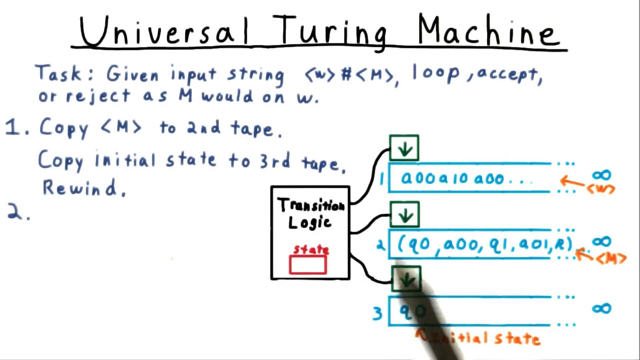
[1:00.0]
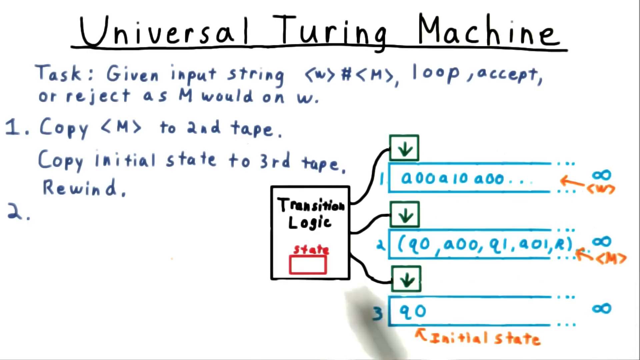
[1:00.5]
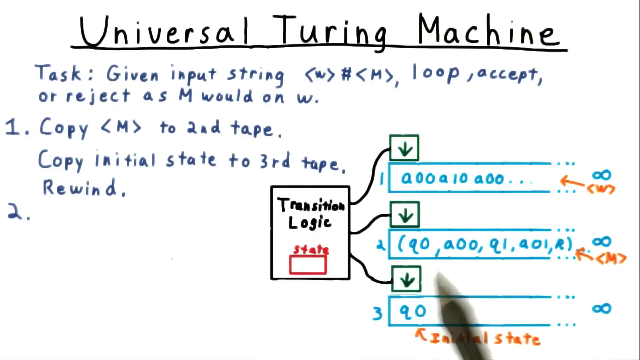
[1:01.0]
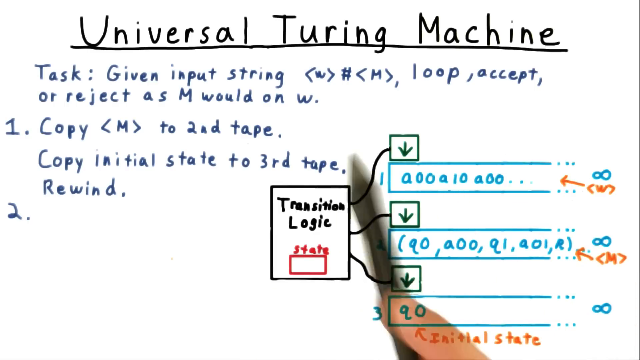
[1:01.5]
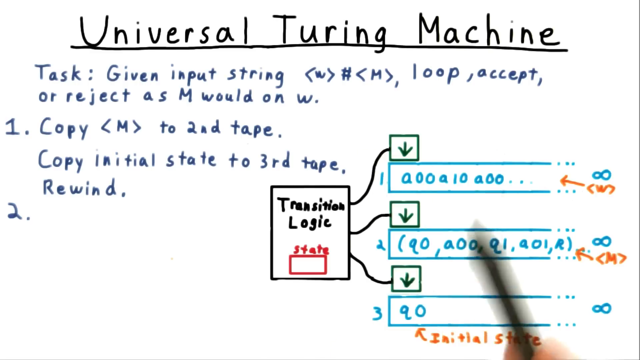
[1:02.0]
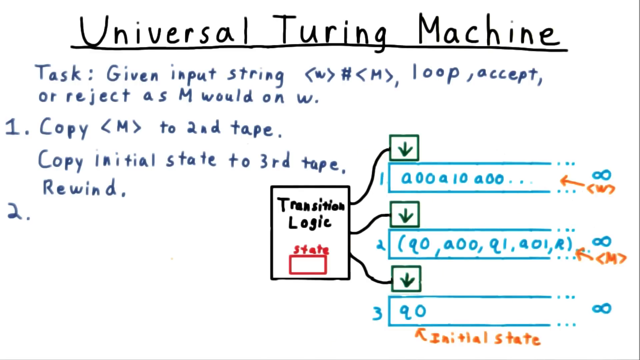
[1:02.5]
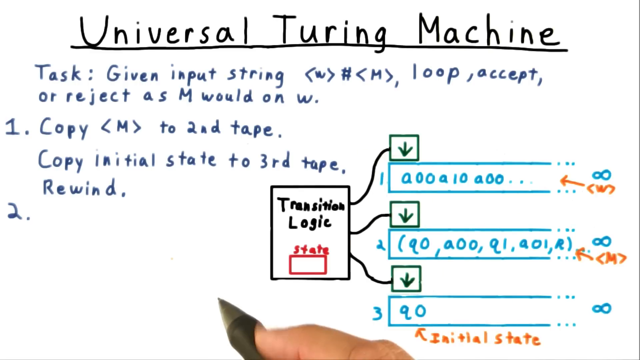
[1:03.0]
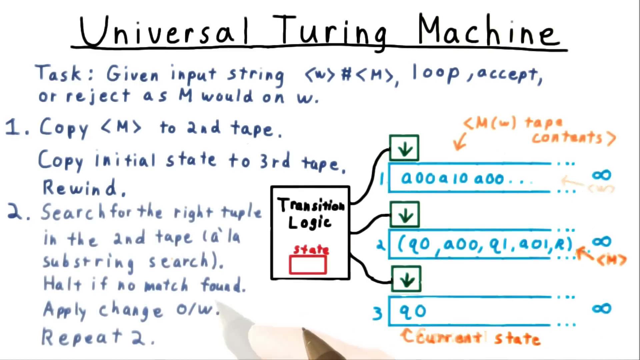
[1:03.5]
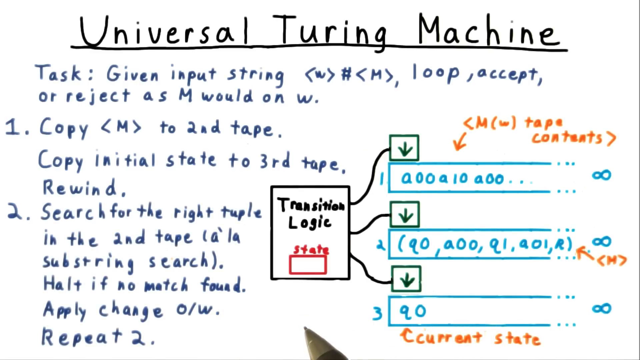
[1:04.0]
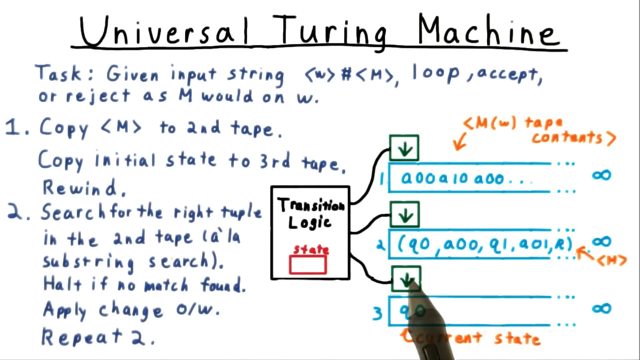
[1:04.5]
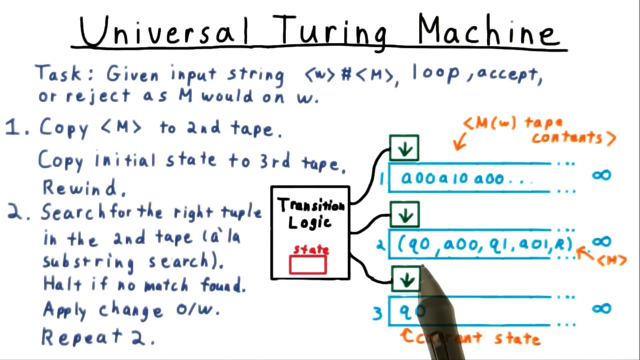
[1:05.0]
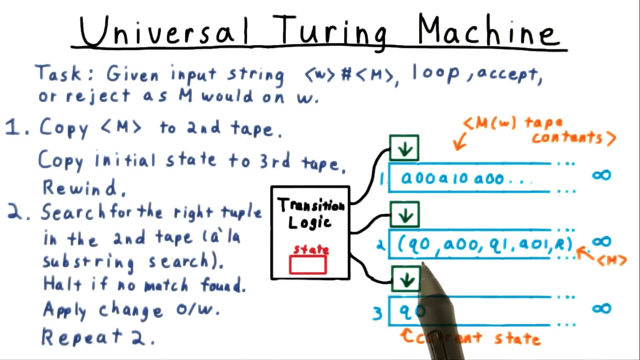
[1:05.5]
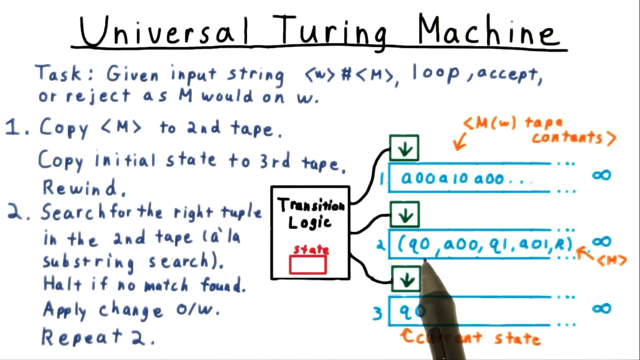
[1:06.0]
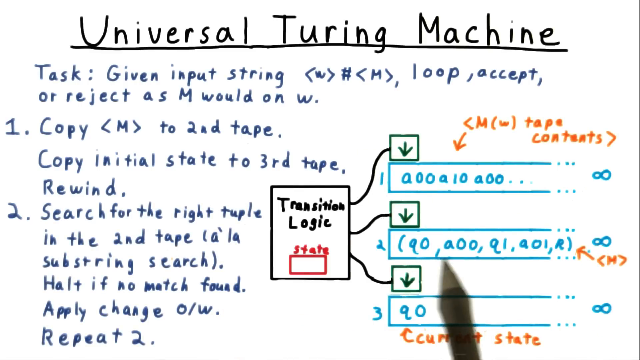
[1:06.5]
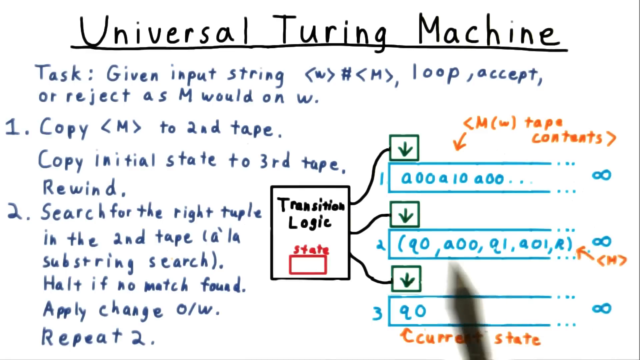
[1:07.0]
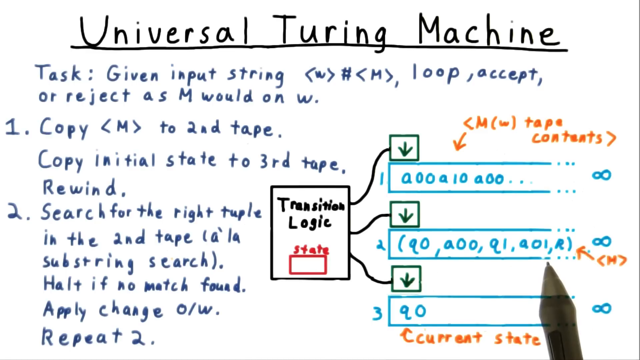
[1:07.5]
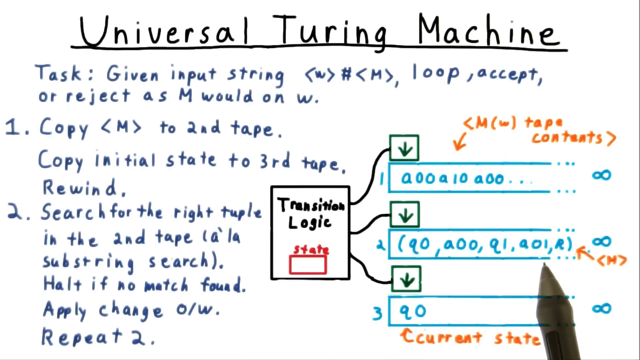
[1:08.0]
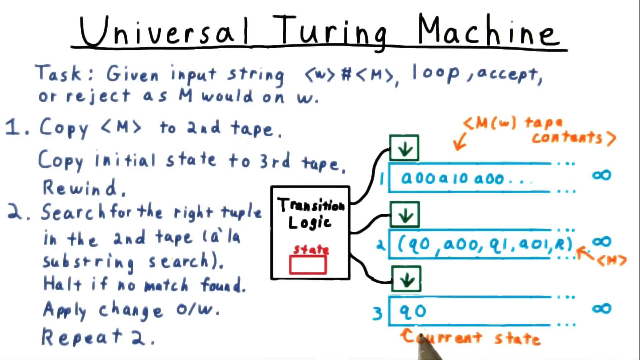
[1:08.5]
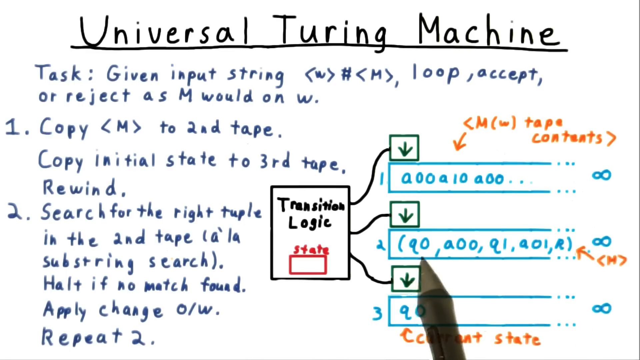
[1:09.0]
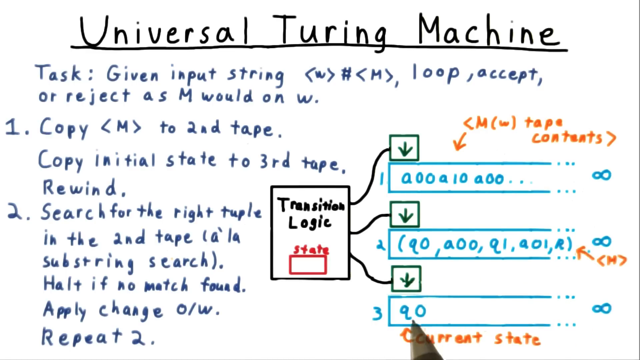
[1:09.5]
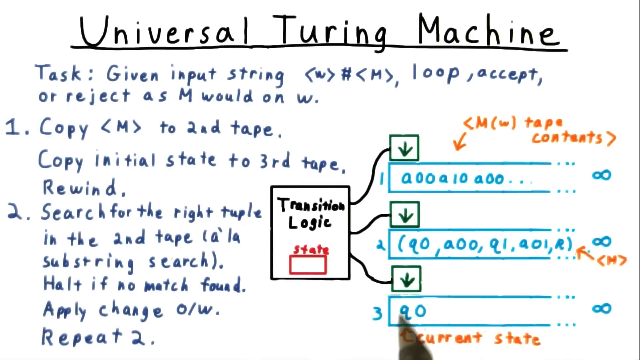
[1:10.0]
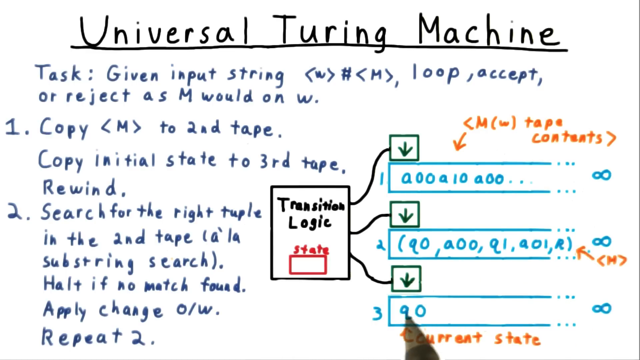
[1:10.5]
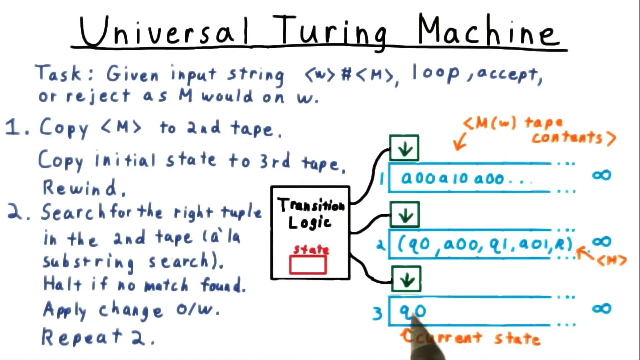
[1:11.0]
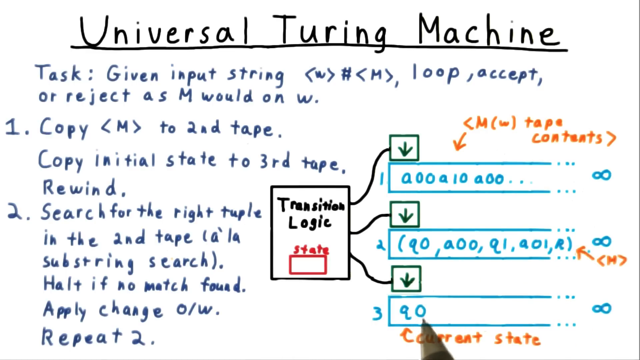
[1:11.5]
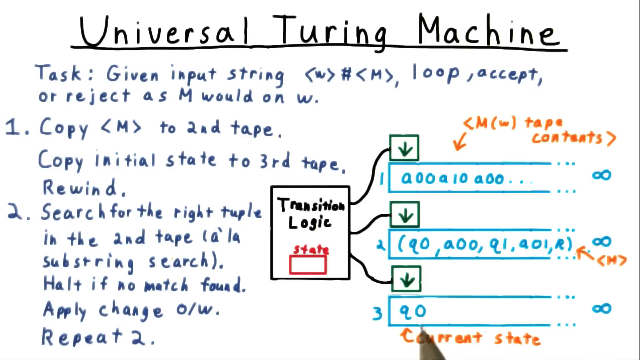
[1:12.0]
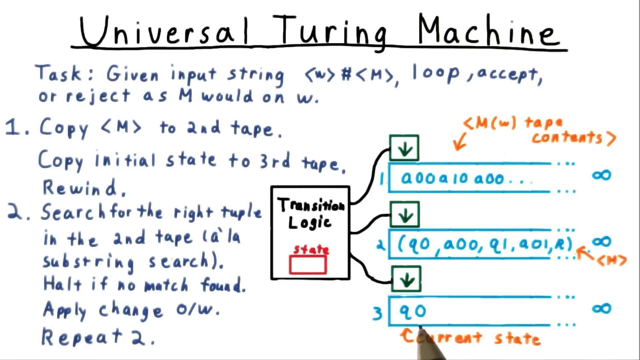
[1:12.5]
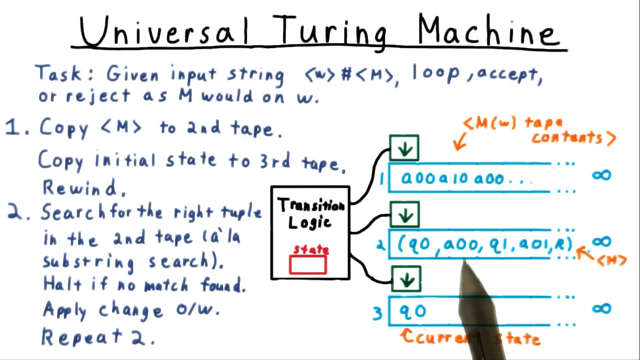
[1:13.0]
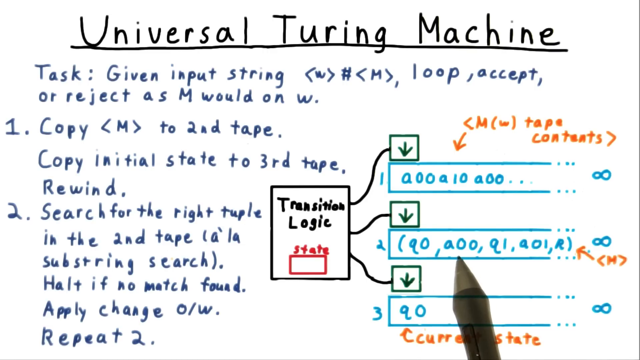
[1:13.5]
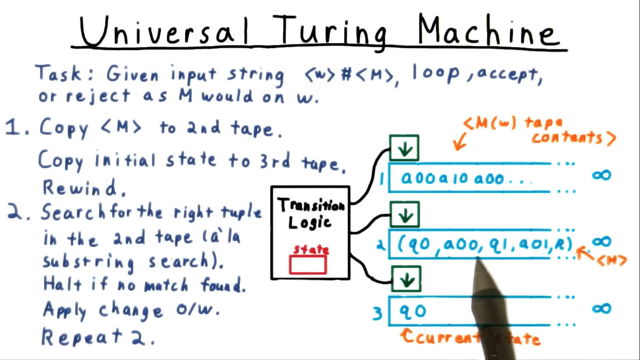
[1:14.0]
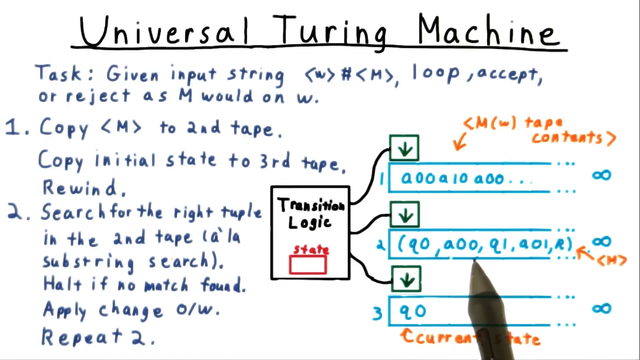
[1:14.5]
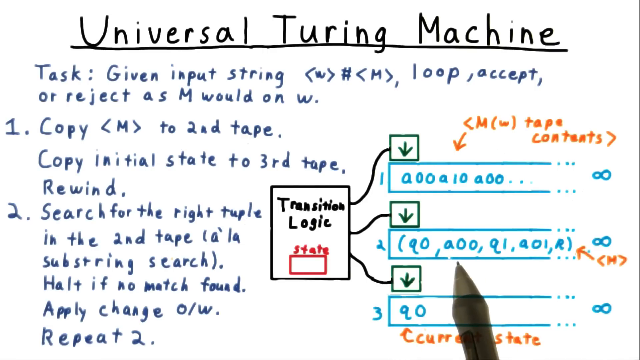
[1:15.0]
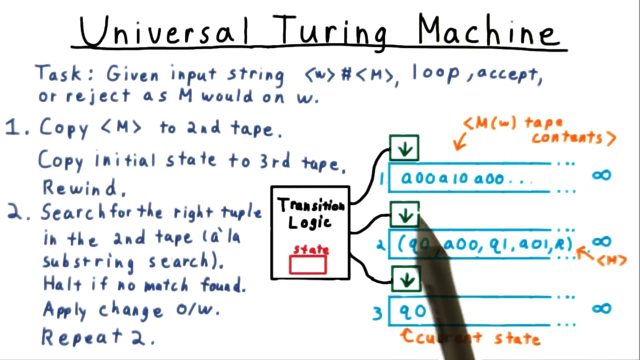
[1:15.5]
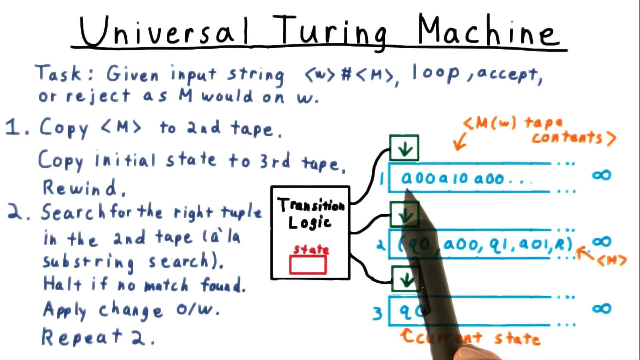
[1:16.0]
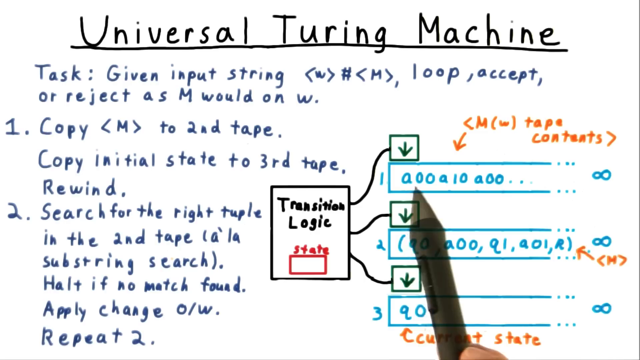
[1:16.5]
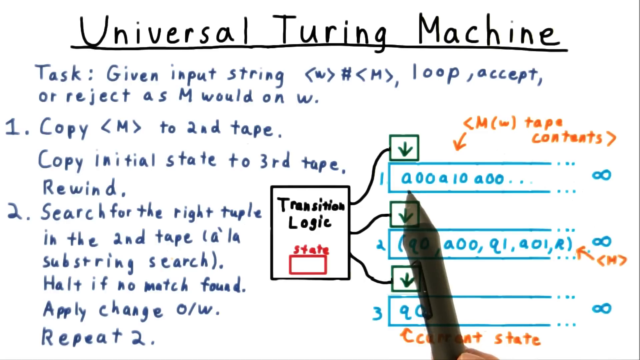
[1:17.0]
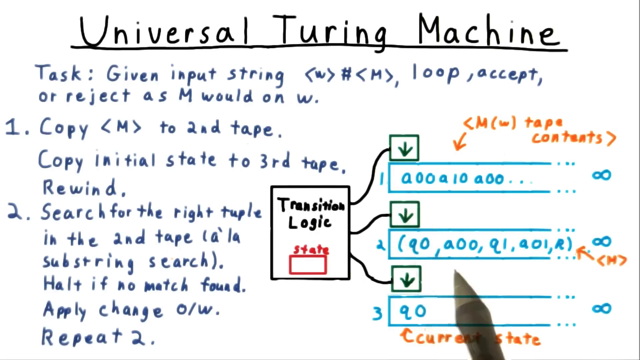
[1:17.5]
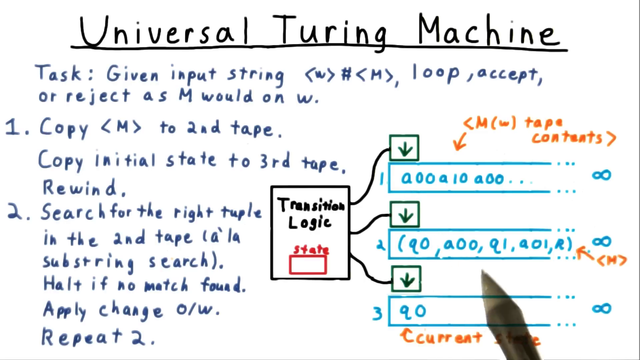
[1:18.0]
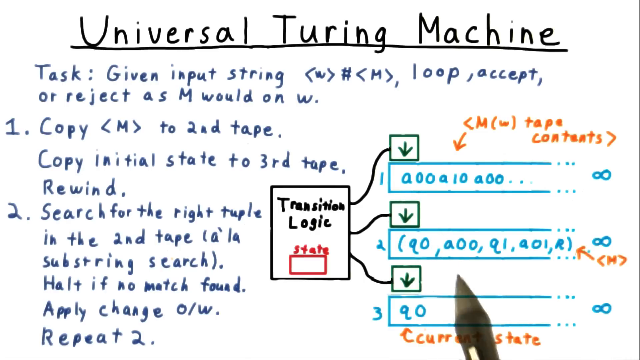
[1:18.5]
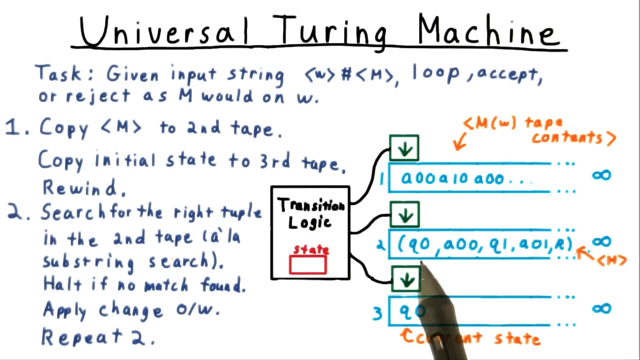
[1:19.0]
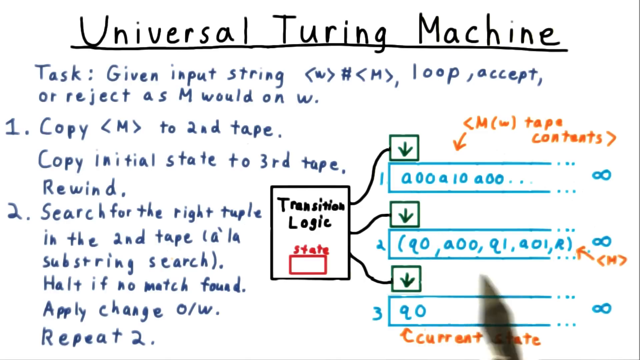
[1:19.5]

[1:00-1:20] The digital whiteboard is covered in text, with a diagram on the right-hand side. The creator holds a stylus pen and points it at the diagram on the right, a flow diagram showing transition logic. They appear to point at different sections one by one, starting from the bottom of a box that has some numbers in it, drawing a line underneath, then moving down to the next one and doing the same. The text on the screen is the same as before, but a second point has been added, reading "2. search for the right tuple in the second tape, (a la substring search)" and continuing to "Apply change o/w."